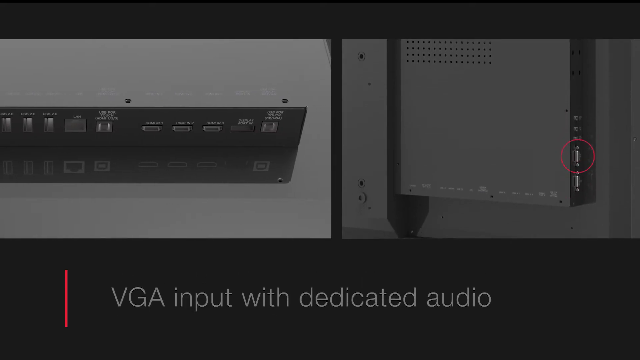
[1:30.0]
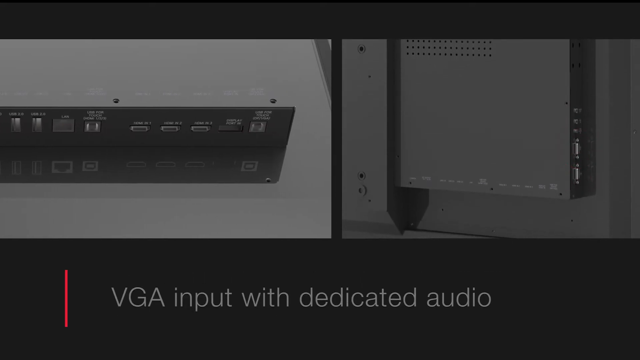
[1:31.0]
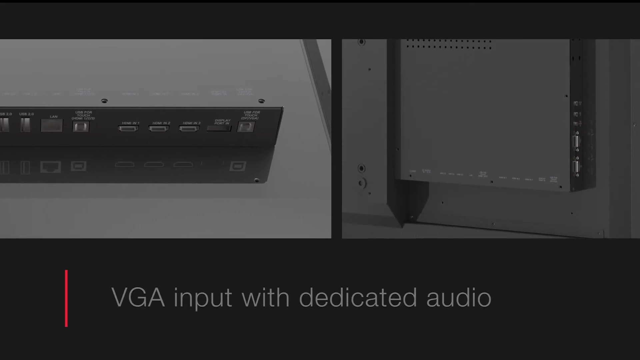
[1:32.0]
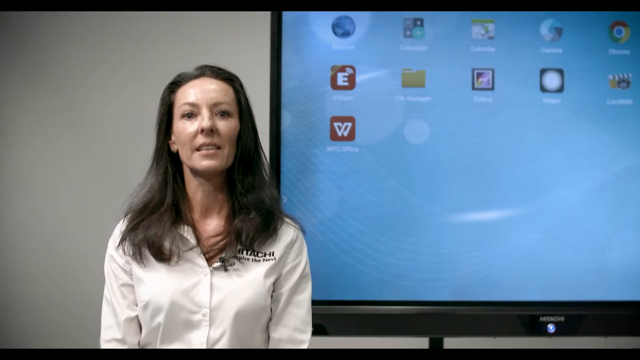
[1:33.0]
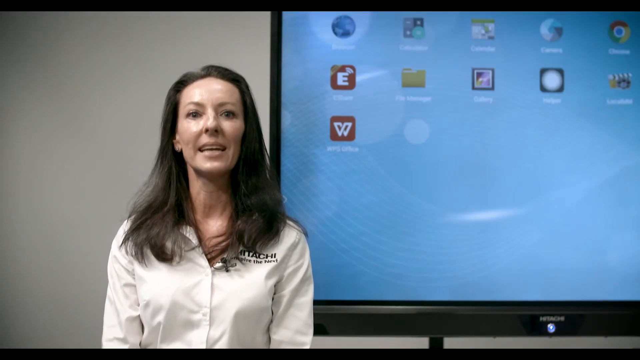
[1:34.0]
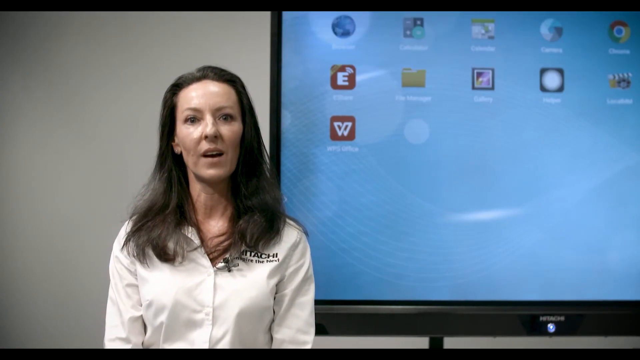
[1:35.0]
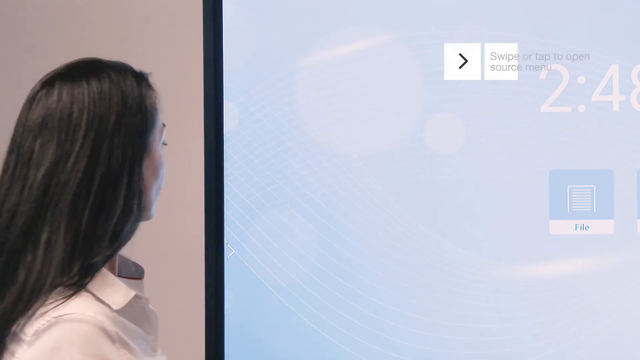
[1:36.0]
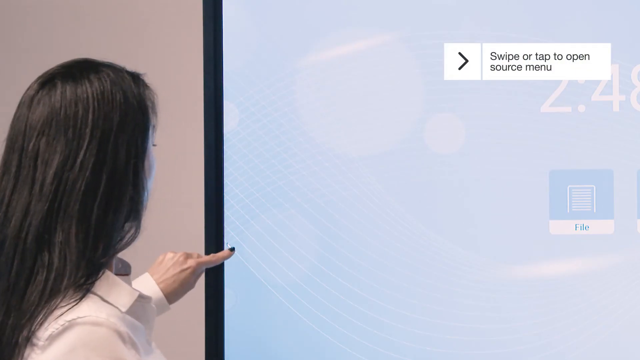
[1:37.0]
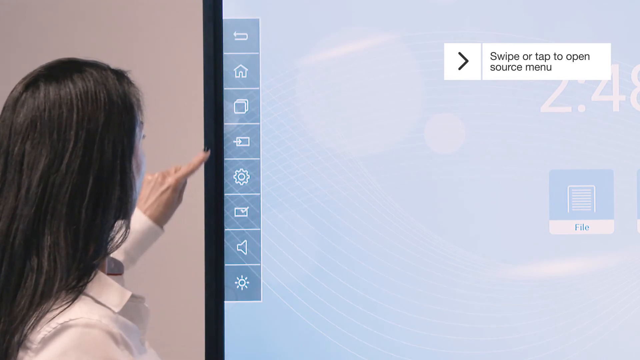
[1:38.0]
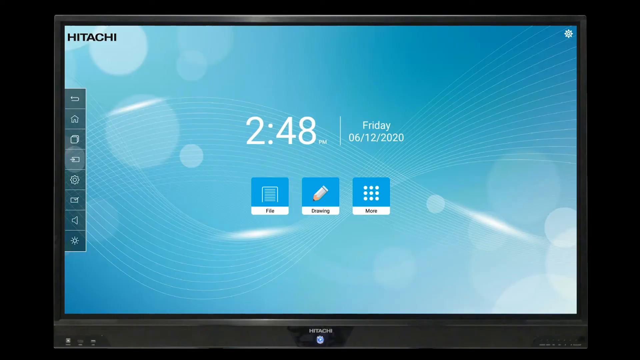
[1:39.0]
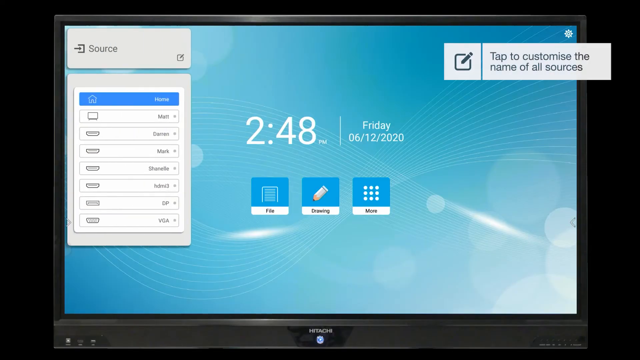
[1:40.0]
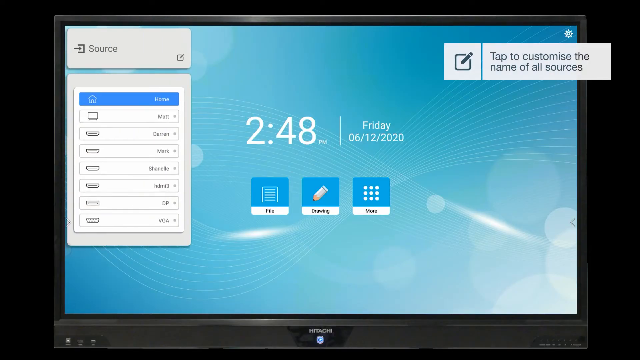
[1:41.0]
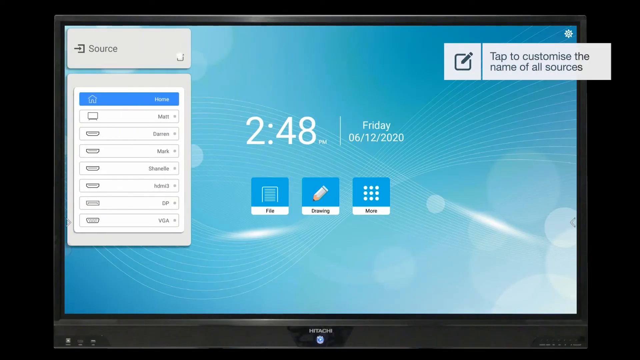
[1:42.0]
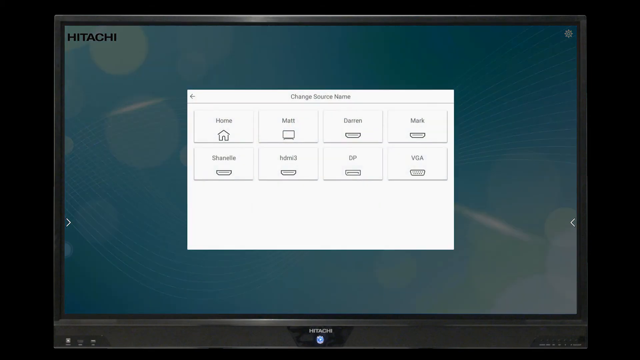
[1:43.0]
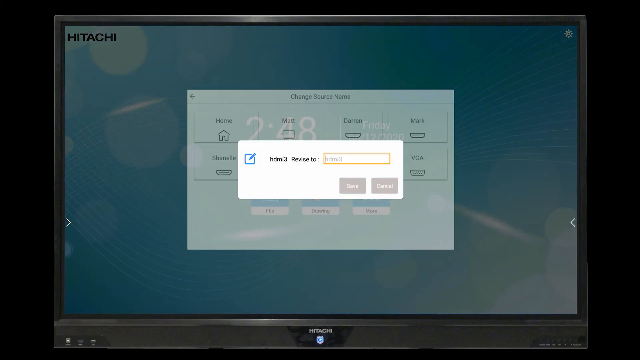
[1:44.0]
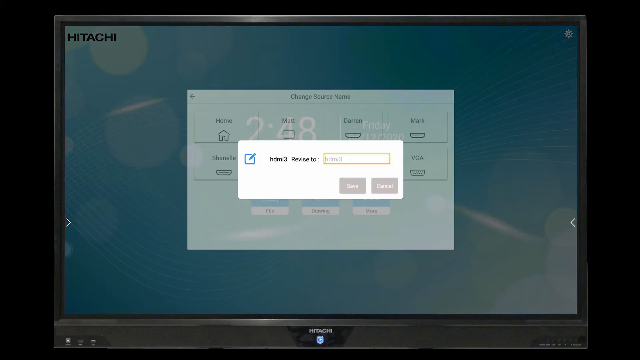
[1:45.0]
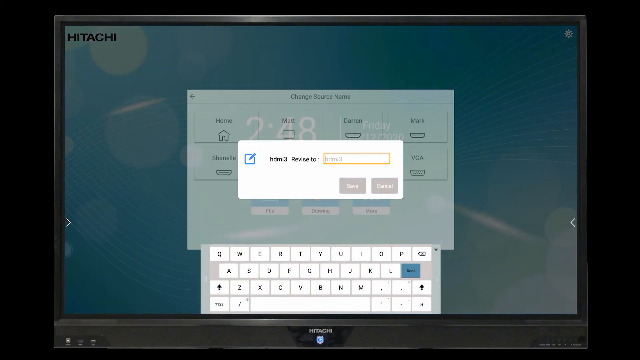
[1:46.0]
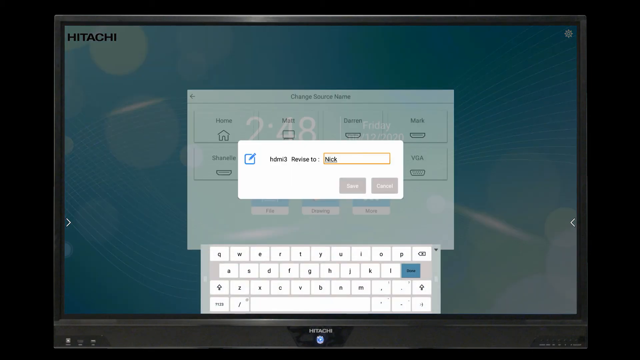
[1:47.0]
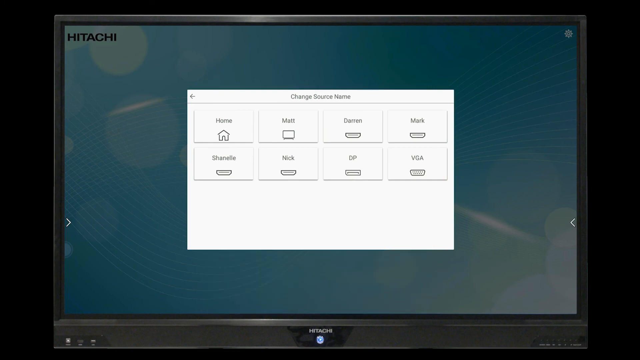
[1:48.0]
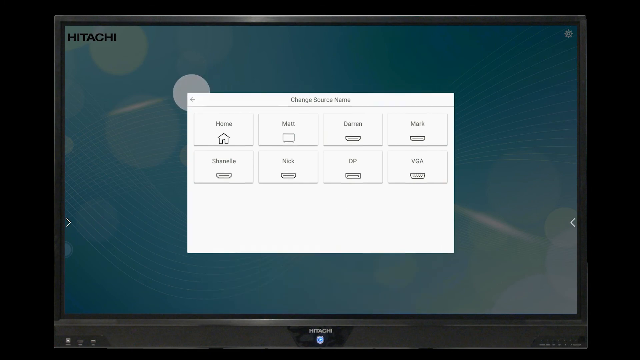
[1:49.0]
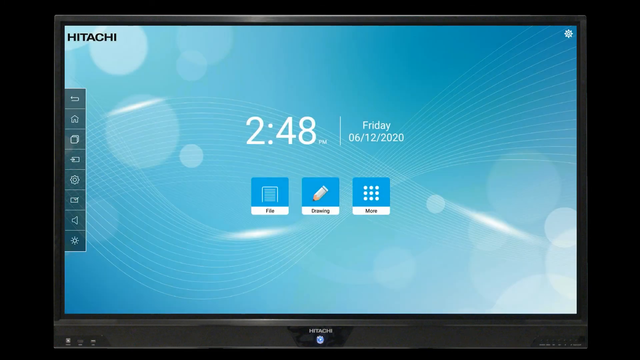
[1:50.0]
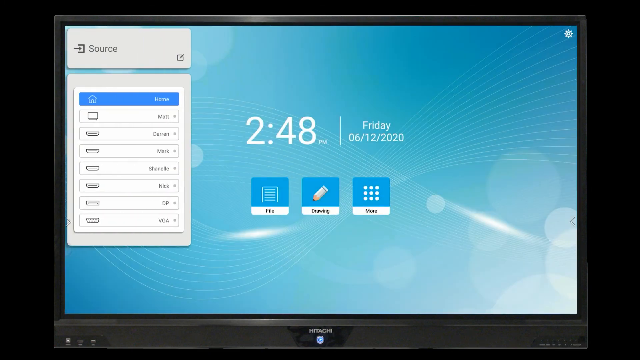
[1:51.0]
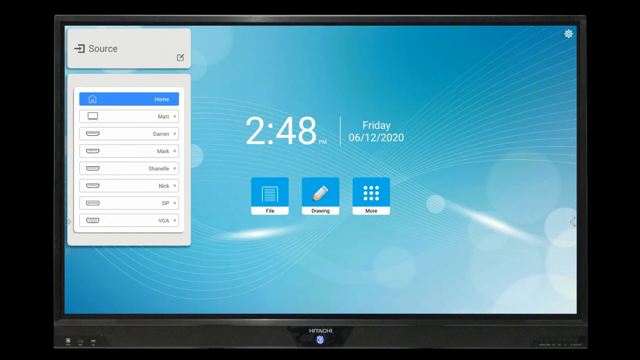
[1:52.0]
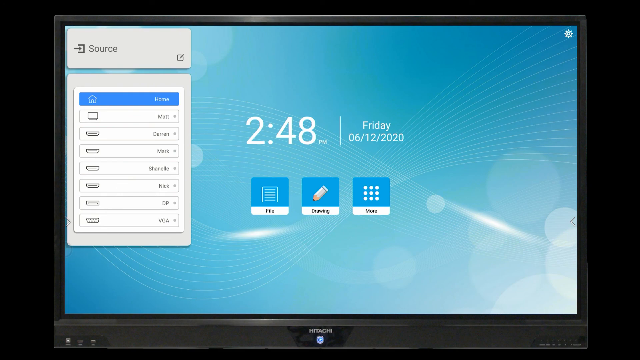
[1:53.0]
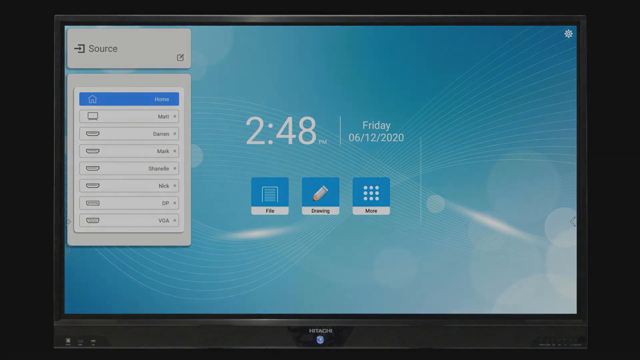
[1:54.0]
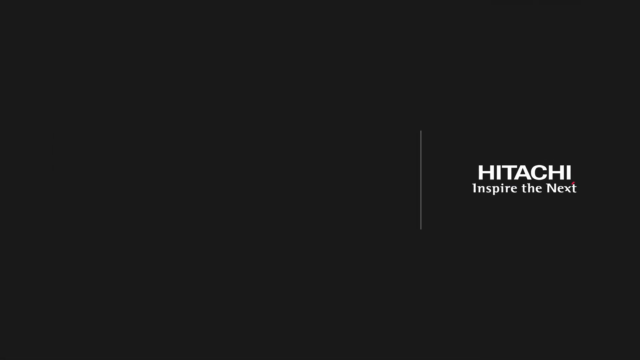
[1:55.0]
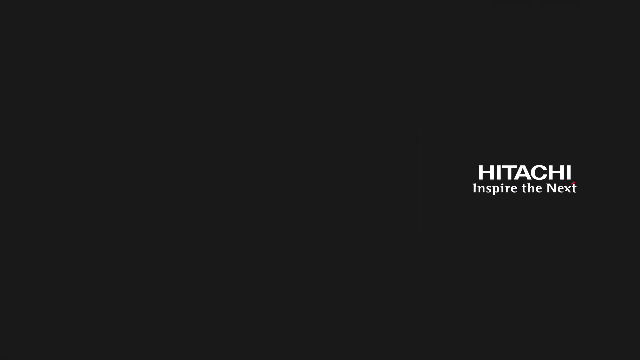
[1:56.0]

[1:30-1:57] The woman touches the touch-responsive screen and opens sources, where a number of sources are listed, including home, VGA and DP (DisplayPort). A prompt says "start to customize the name of all sources." She apparently demonstrates renaming, changing HDMI 3 to NEC, then goes back to confirm that NEC is there. Swiping or tapping on the screen brings up the source menu, and there is an edit button for editing the source names.